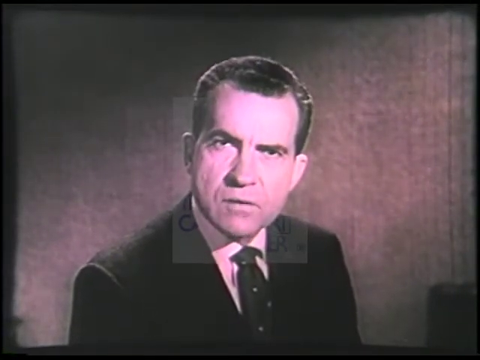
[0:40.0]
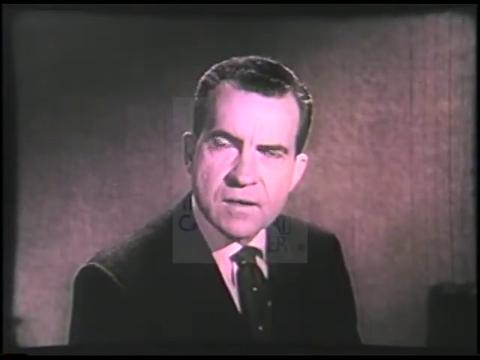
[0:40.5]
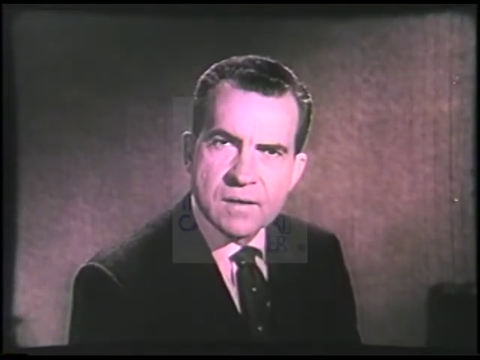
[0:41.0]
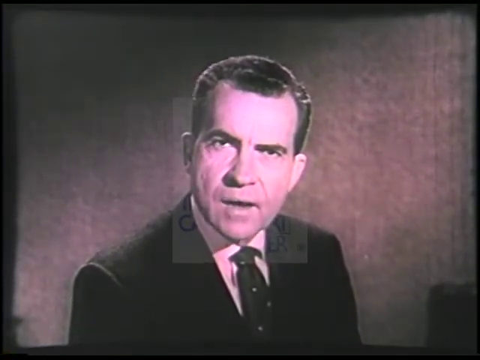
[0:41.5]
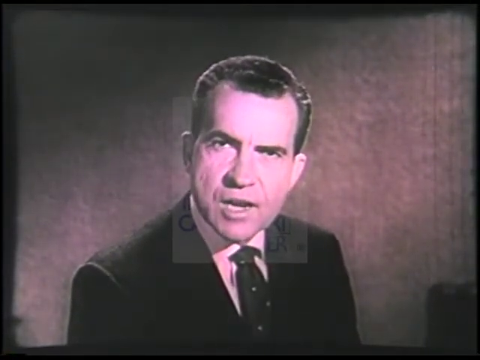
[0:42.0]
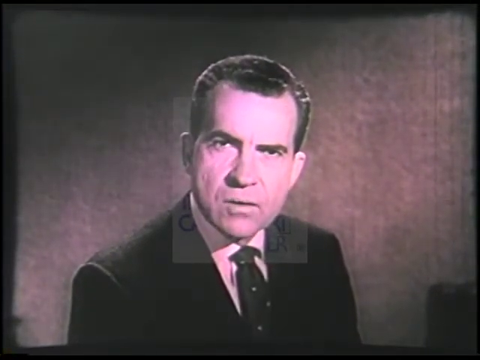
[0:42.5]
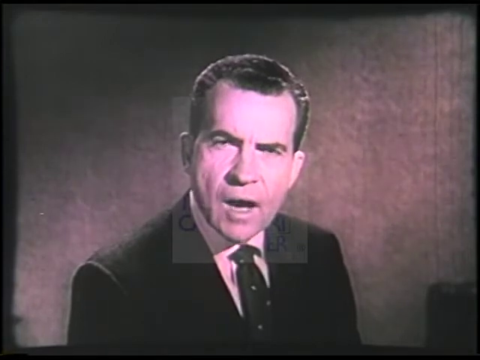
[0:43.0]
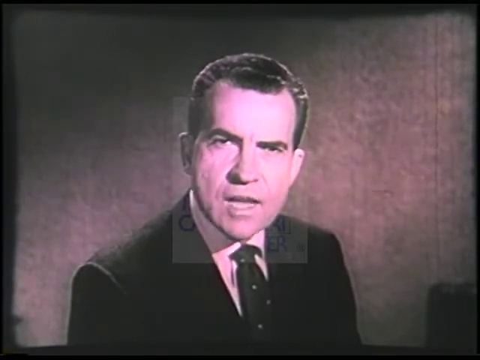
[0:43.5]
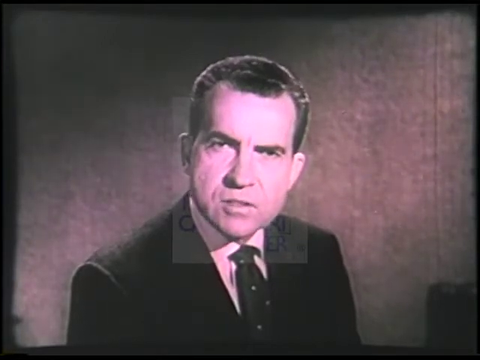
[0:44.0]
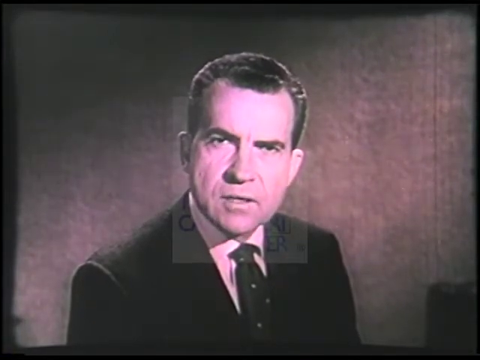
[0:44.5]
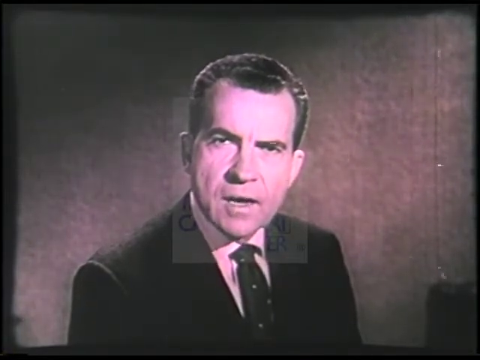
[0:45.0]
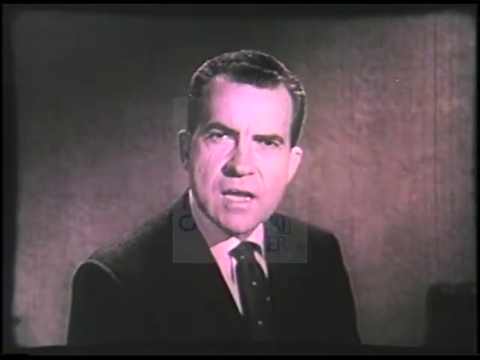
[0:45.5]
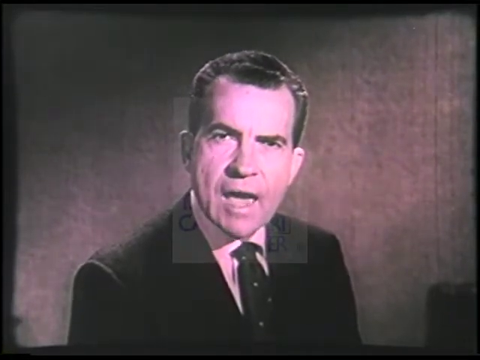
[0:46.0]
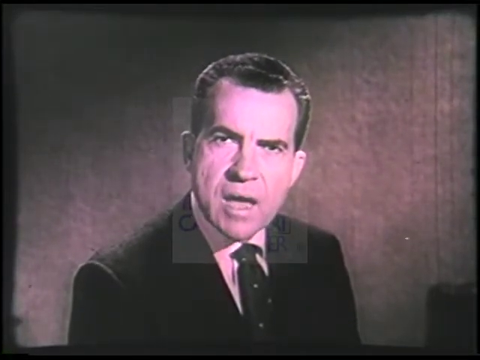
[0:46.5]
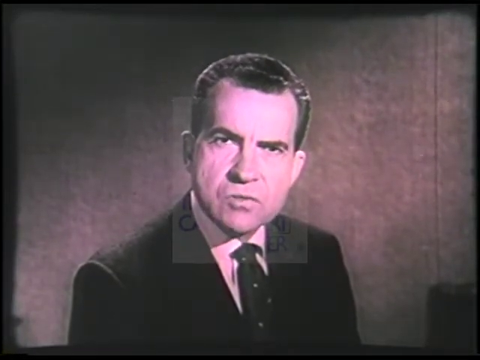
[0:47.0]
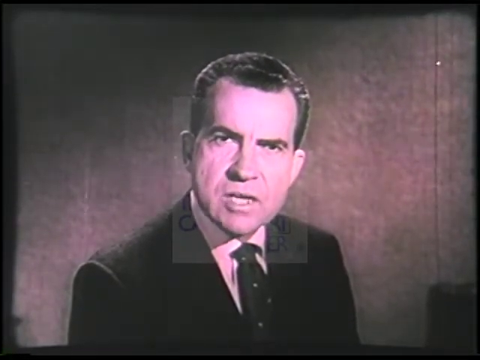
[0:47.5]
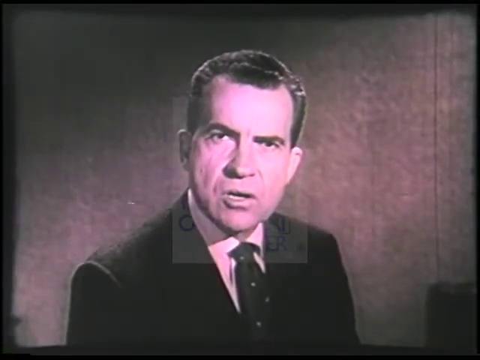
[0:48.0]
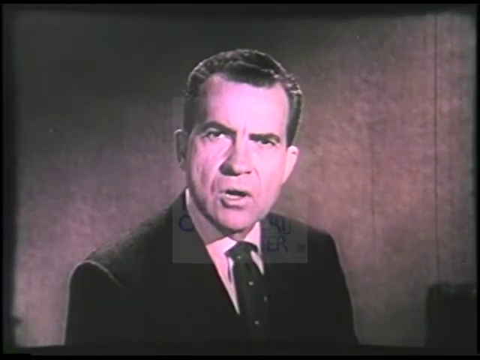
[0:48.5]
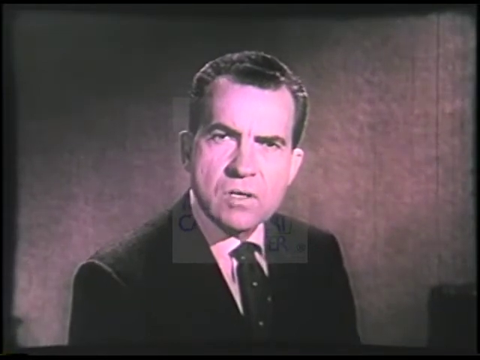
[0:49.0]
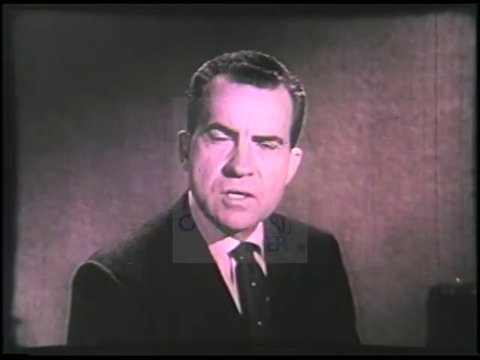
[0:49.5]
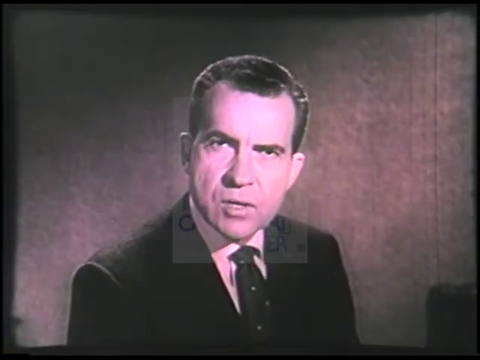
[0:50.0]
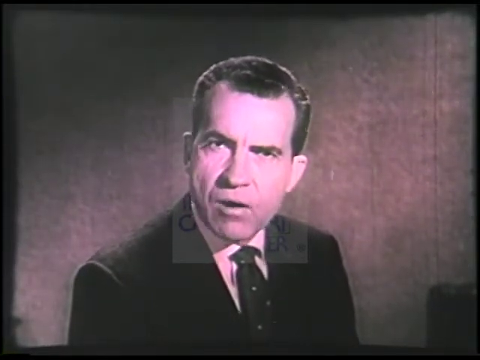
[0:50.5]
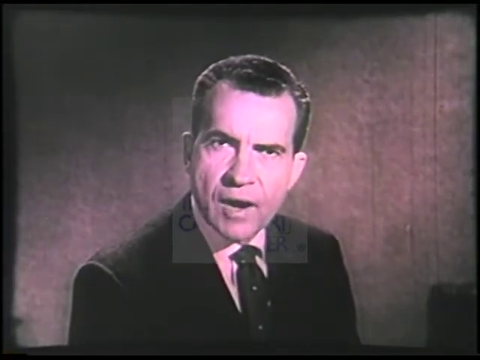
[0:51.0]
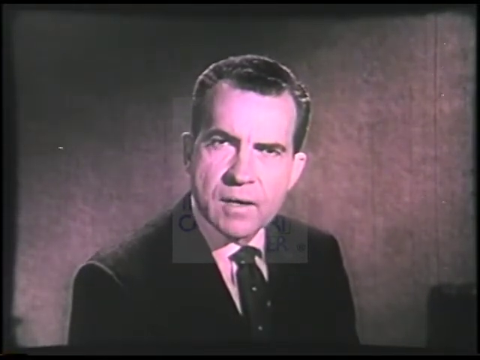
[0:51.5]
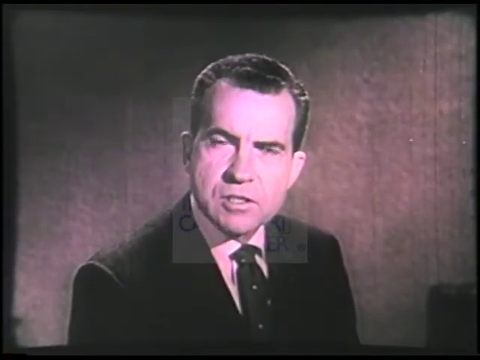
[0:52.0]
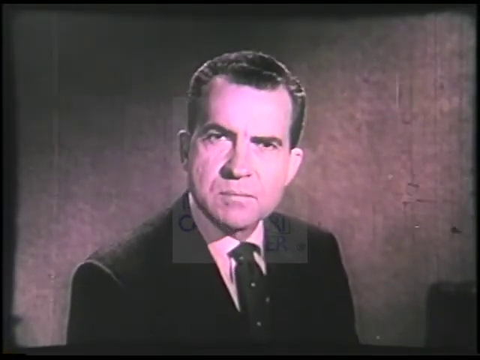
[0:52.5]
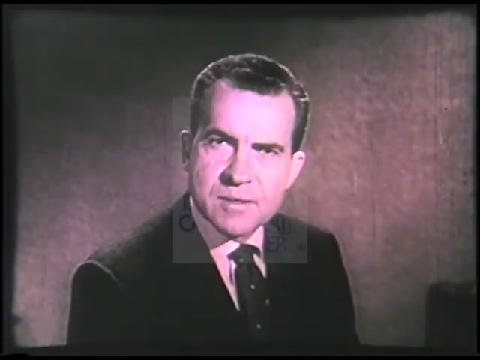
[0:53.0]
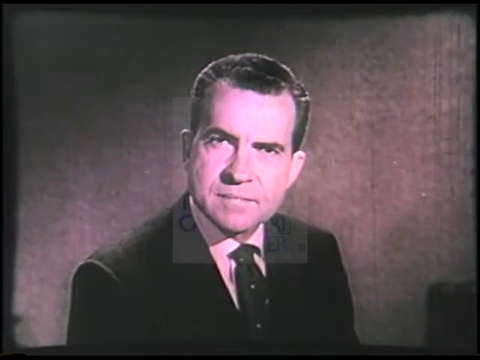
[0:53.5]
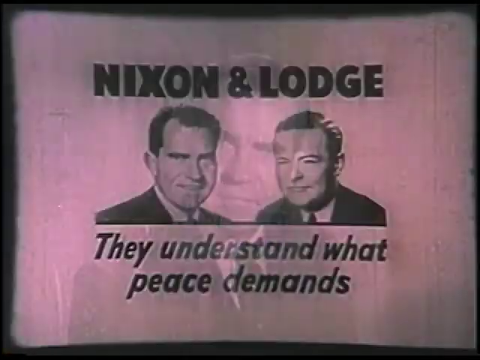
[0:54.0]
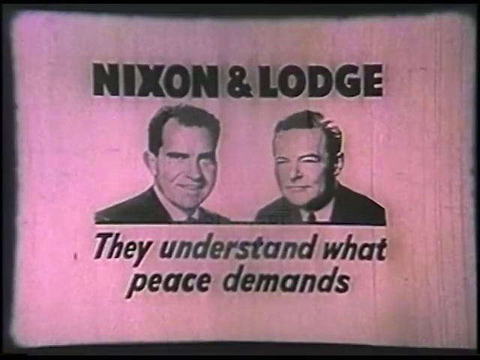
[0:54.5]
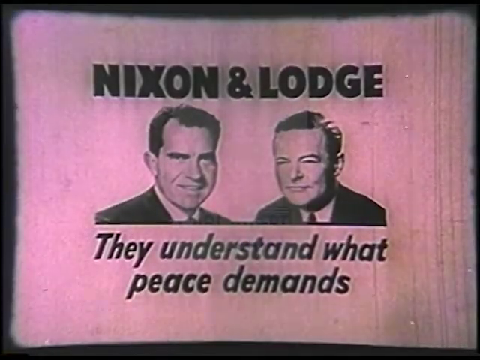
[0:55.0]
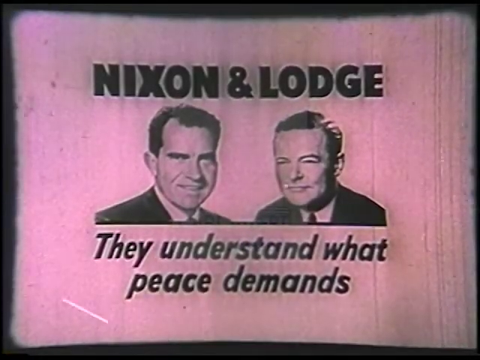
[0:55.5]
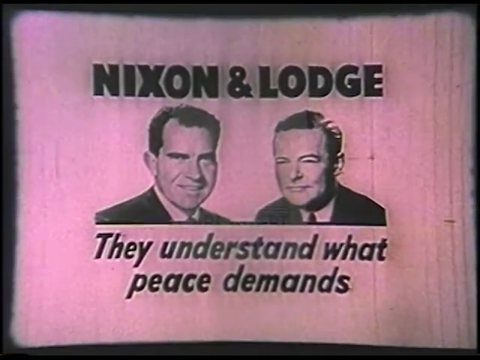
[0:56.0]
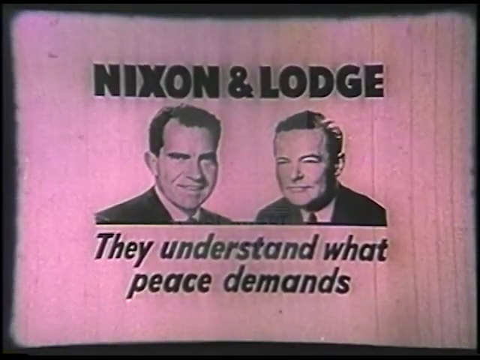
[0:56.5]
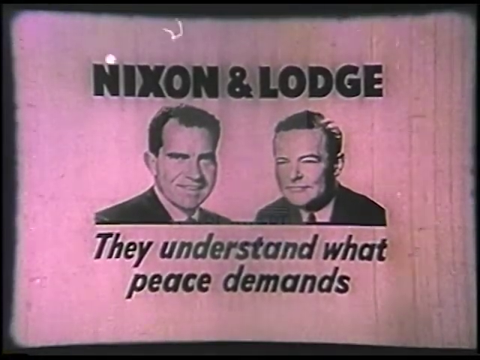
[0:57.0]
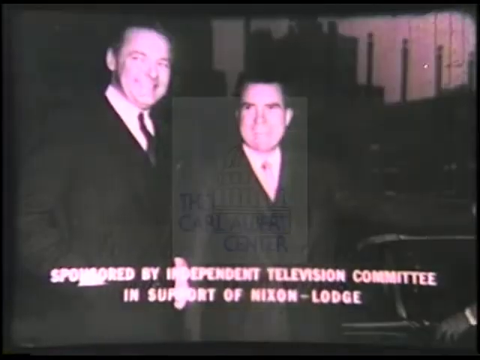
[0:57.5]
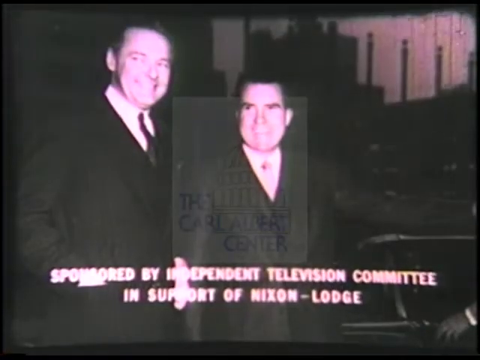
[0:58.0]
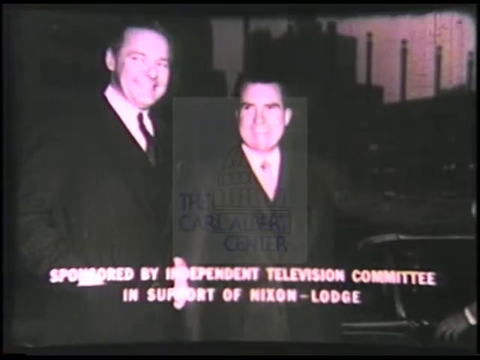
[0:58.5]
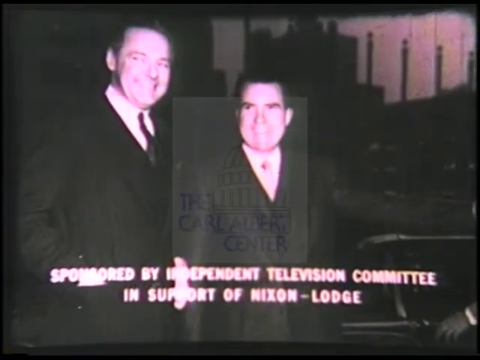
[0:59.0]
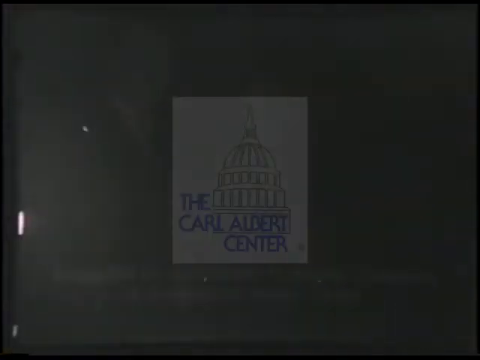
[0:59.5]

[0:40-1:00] Richard Nixon wears a suit, a white shirt and a slightly spotted tie with little dots. He continues to speak into the camera, sometimes stressing his words. Next comes the text "Nixon and Lodge. They understand what peace demands," Lodge apparently being his running mate. Finally, Nixon stands with someone taller than him, and both smile for the camera.